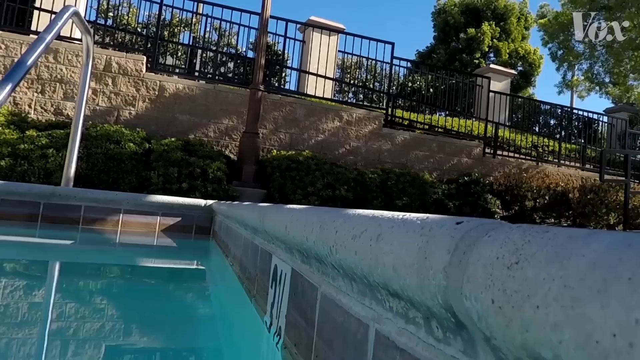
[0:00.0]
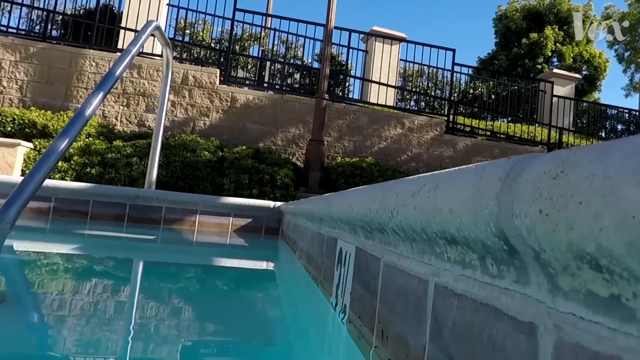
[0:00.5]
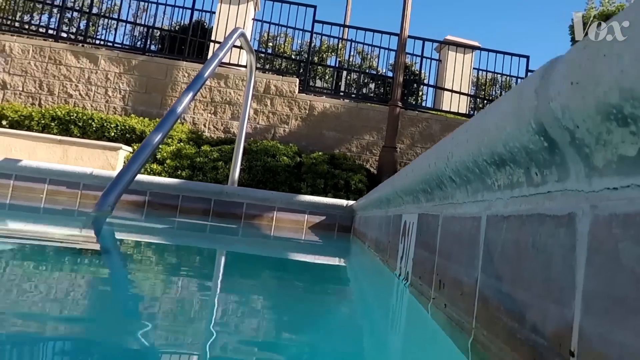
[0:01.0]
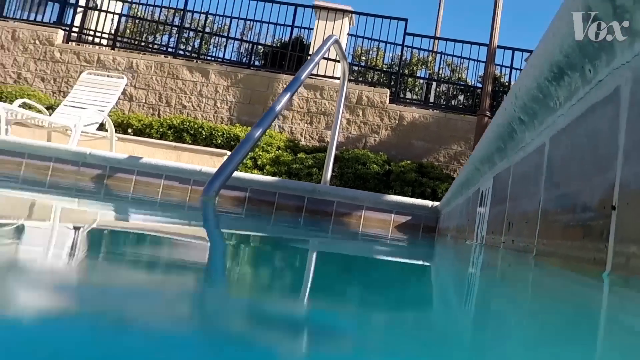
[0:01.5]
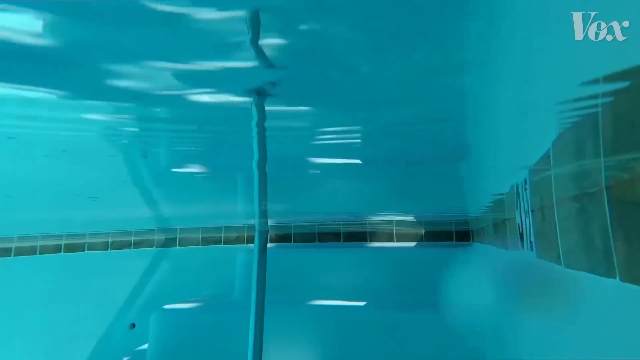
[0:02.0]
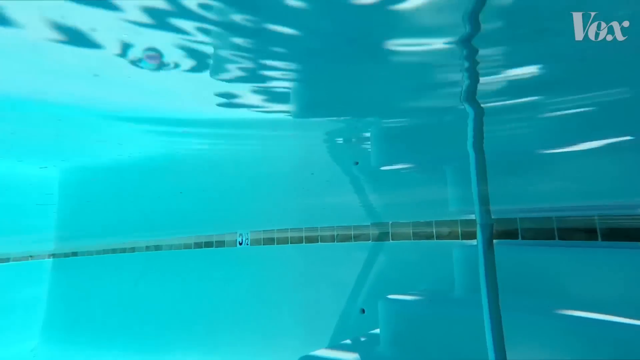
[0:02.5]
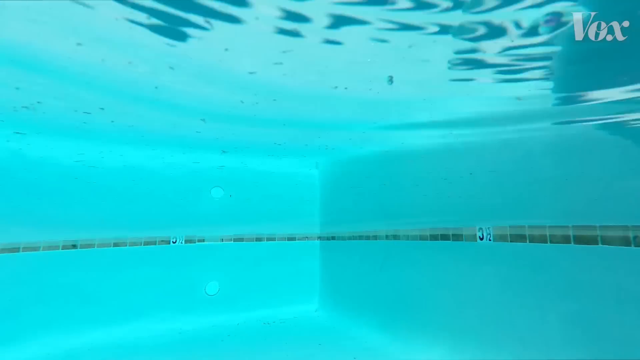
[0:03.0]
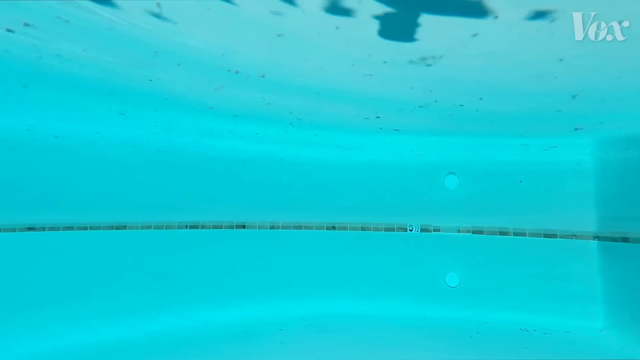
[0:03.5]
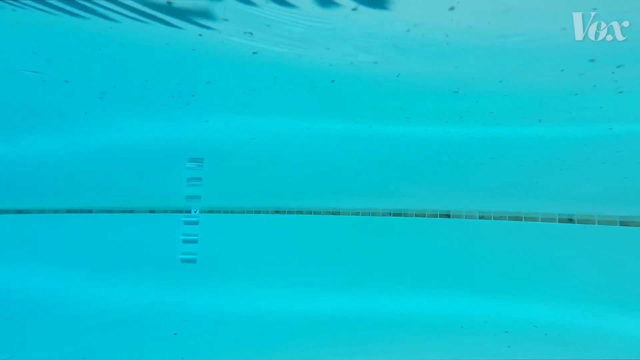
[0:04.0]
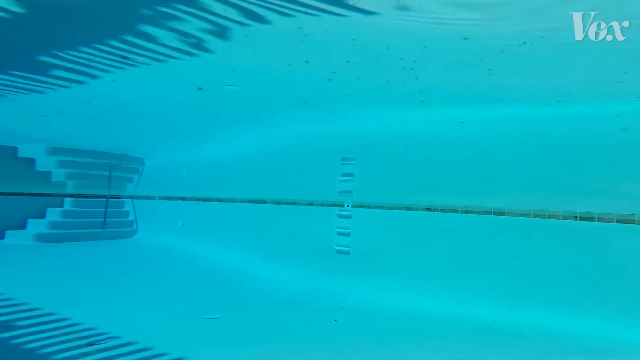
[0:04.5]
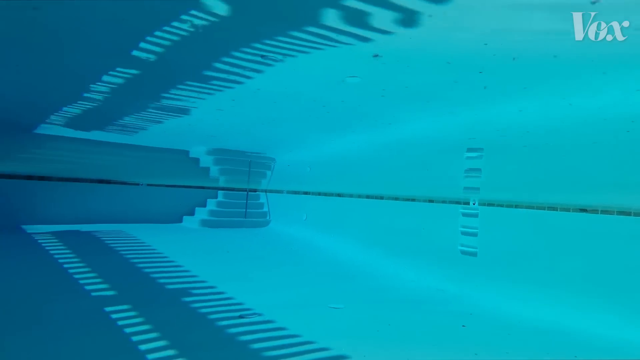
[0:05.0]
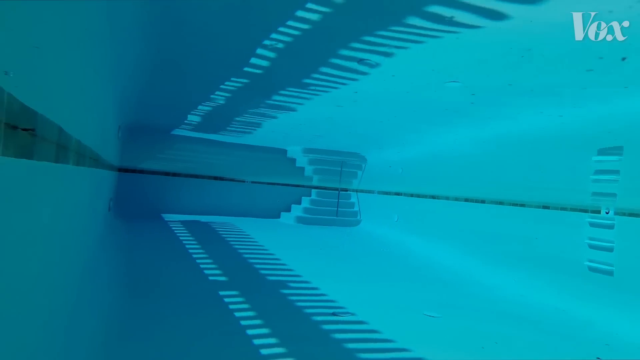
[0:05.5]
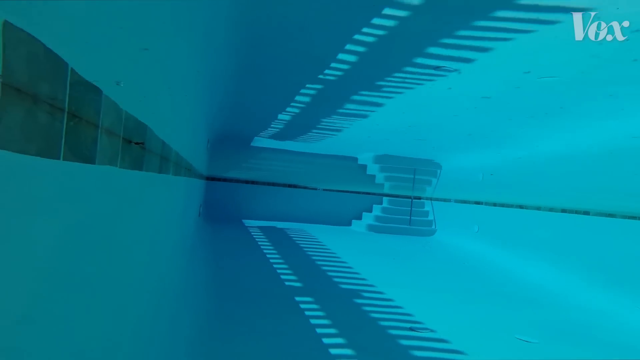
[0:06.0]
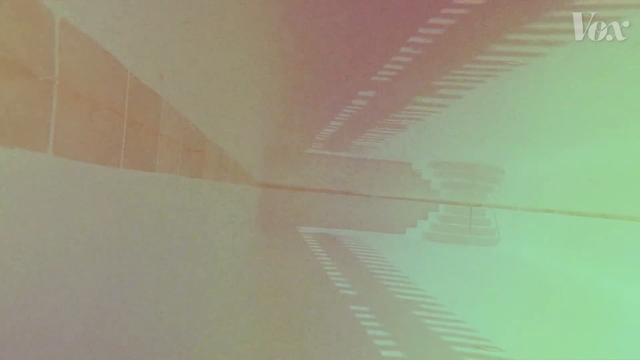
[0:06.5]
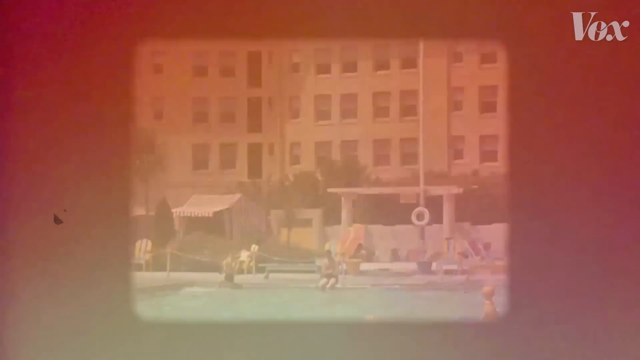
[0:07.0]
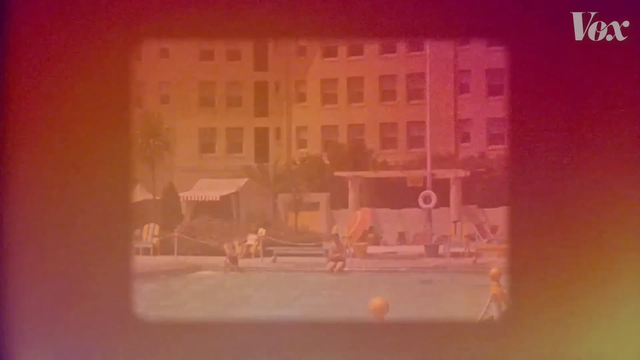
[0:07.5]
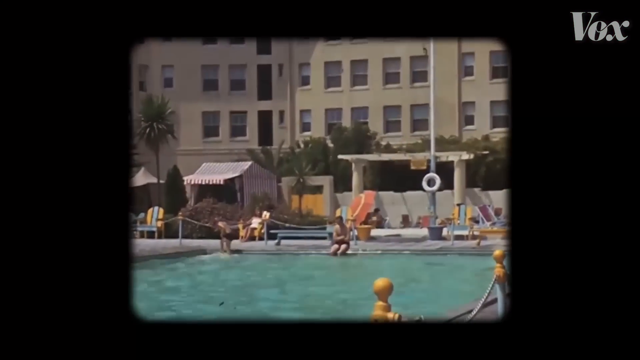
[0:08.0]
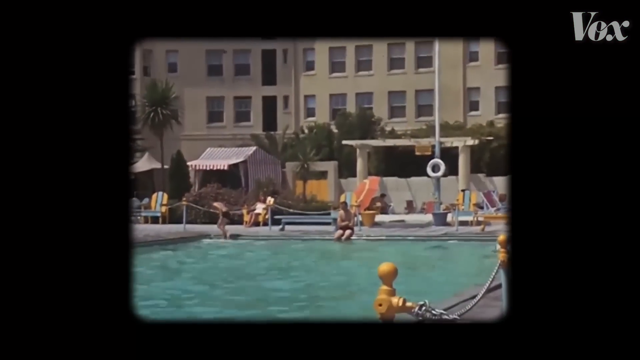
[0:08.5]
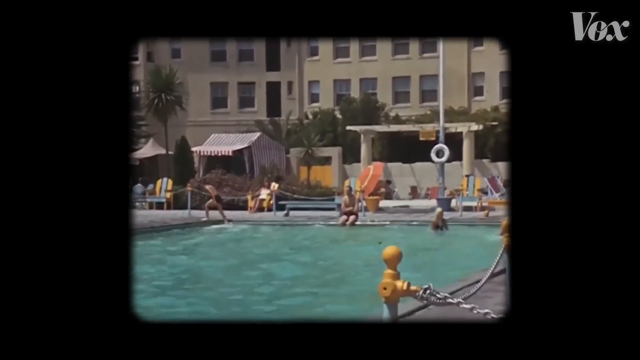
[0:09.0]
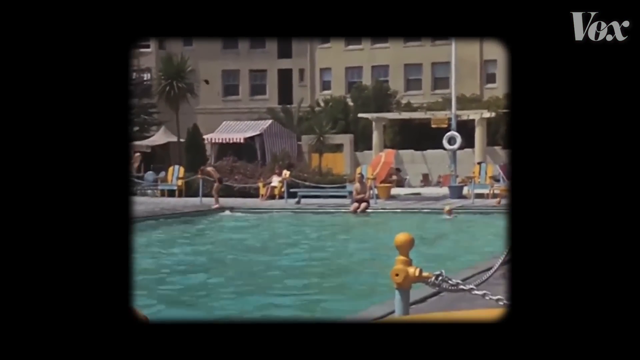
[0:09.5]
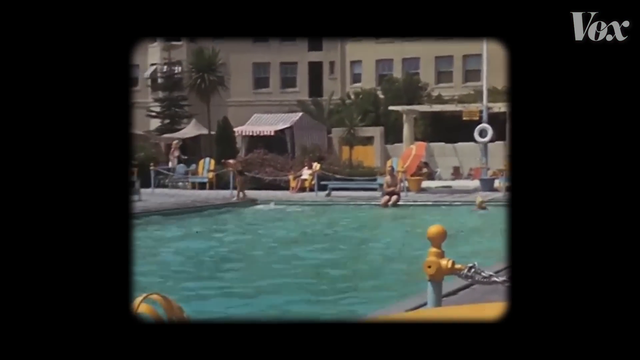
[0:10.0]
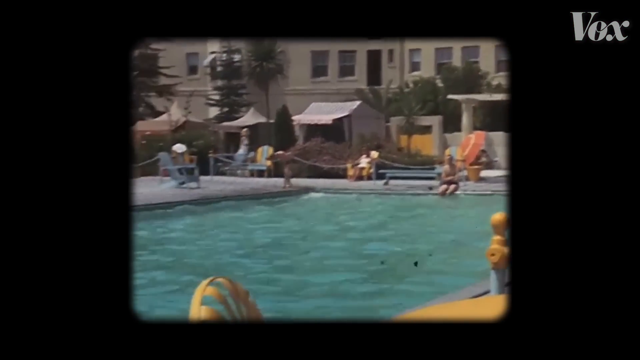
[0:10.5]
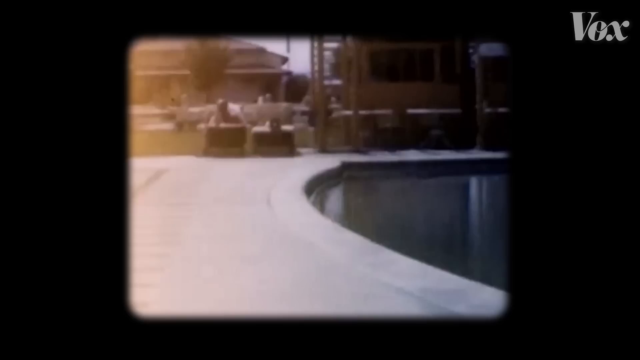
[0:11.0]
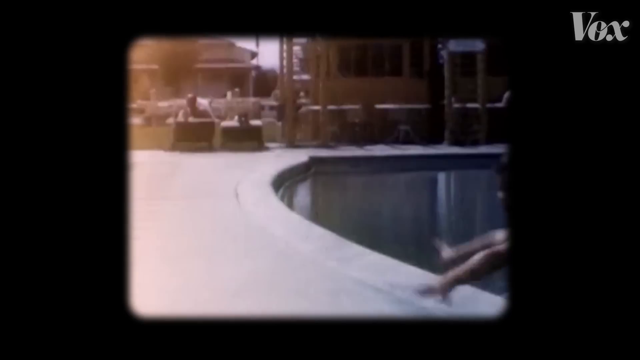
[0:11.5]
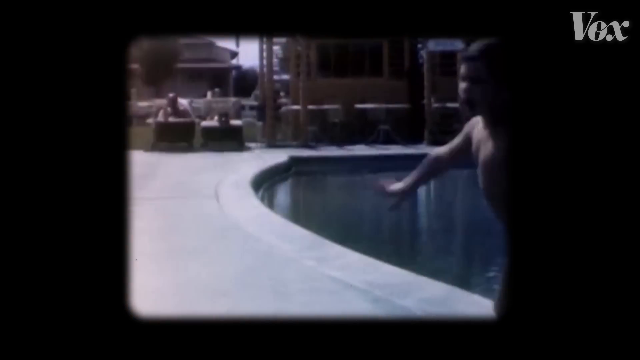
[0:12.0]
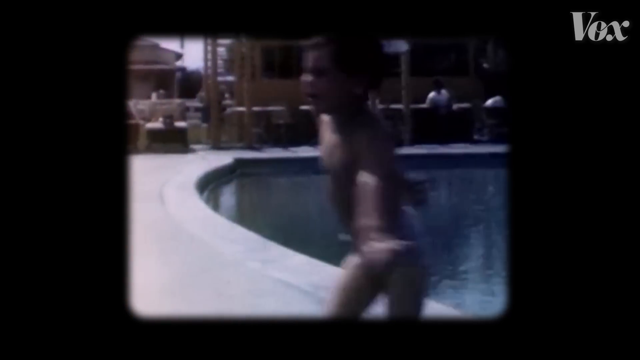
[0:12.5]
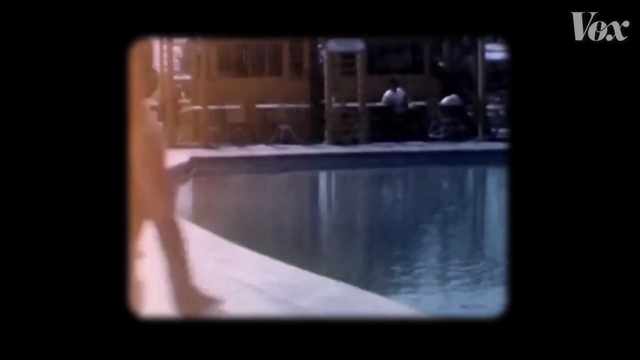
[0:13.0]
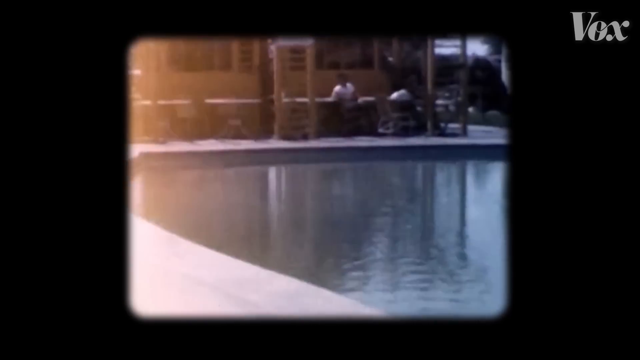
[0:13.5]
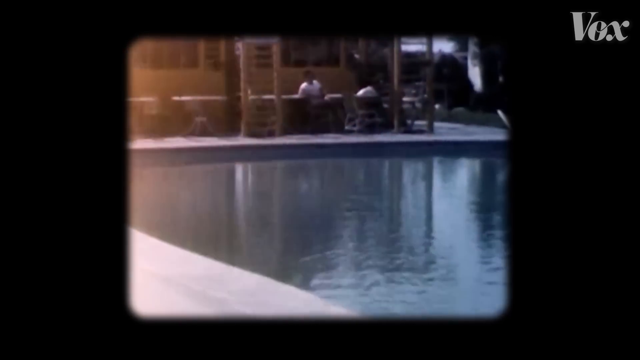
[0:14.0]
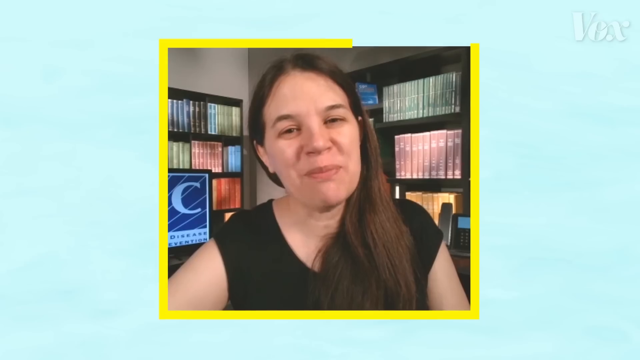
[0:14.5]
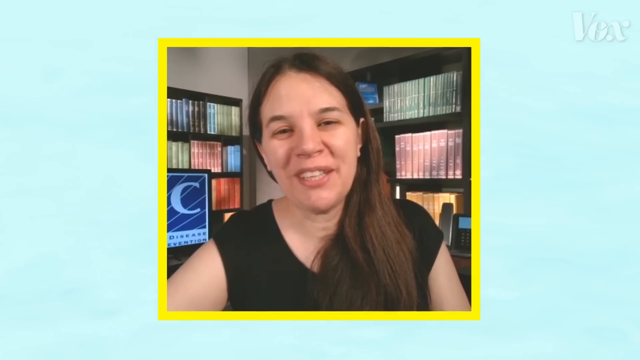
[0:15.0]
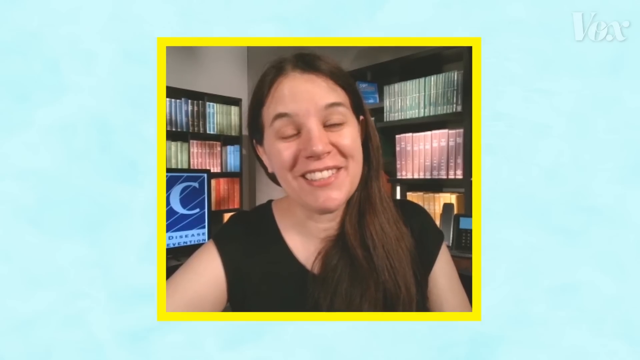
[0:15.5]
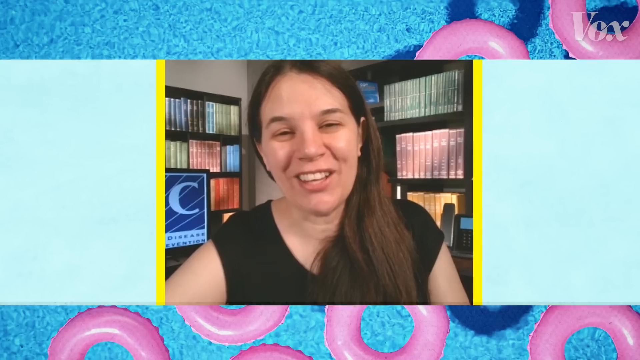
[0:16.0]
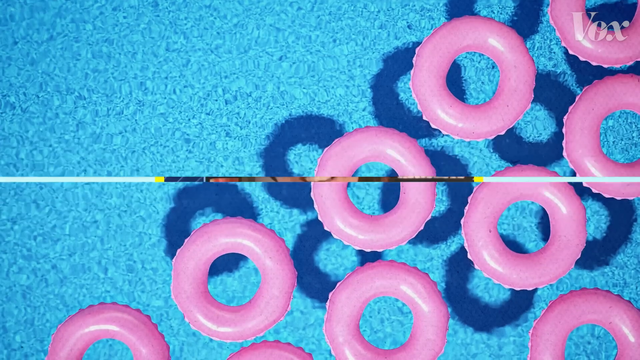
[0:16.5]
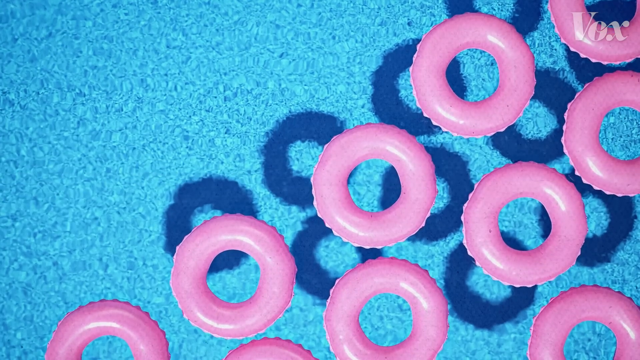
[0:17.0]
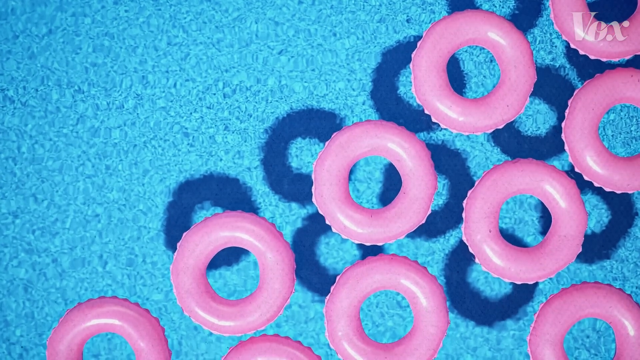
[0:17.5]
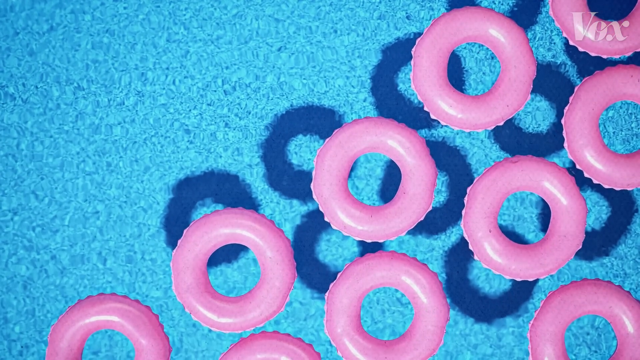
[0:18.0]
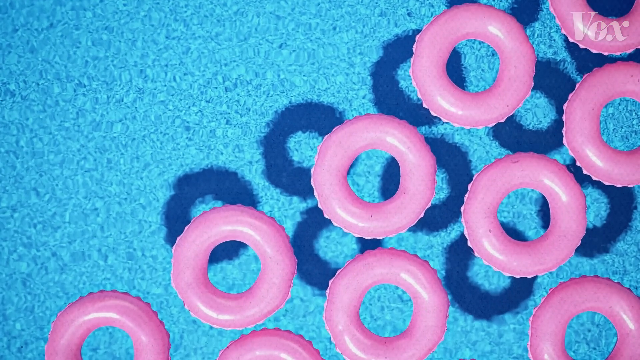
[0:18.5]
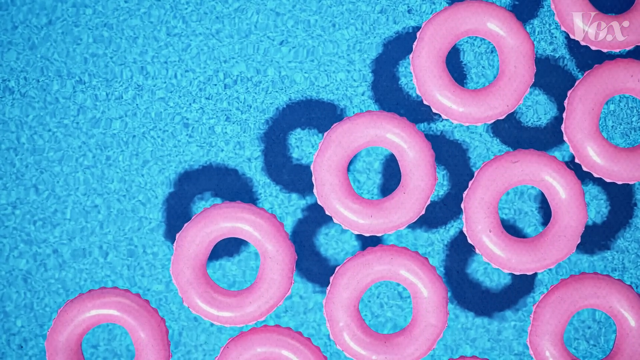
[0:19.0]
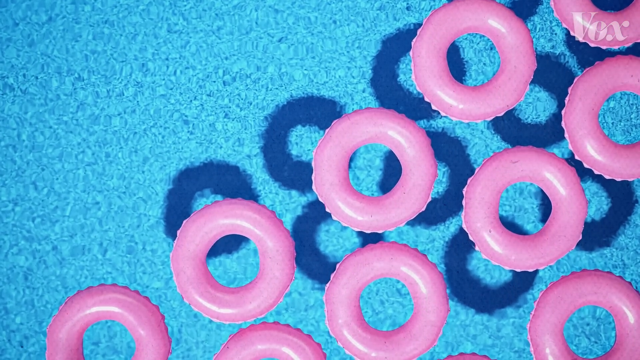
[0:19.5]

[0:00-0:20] A pool is fenced in with cement topped by a black wrought iron fence, with shrubbery around it. The camera is at the top of the pool, showing the water and the tile that runs around the pool. The camera then pans and goes underwater, moving around the bottom of the pool past the stairs and the tile. The scene then changes to what looks like footage from years ago, showing the top of the pool and the deck; the people's clothing, the deck, the patio chairs and the cabana make it look kind of older. The cabana looks kind of red and yellow, and the pool chairs are yellow and white. A man sits kind of far away, apparently wearing red trunks. What looks to be apartment buildings are behind the pool. Children get out of the pool, and a little boy runs right in front of the camera. Next, a woman in a black shirt talks to the camera, with a bookshelf full of books directly behind her. Then a pool appears with a lot of pink floating inner tubes.